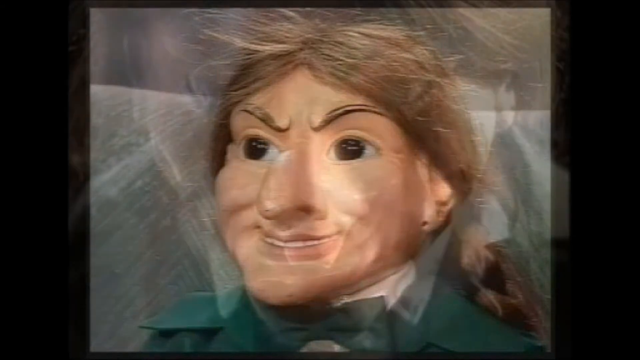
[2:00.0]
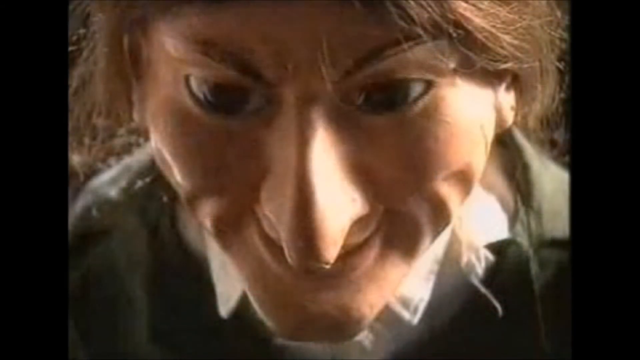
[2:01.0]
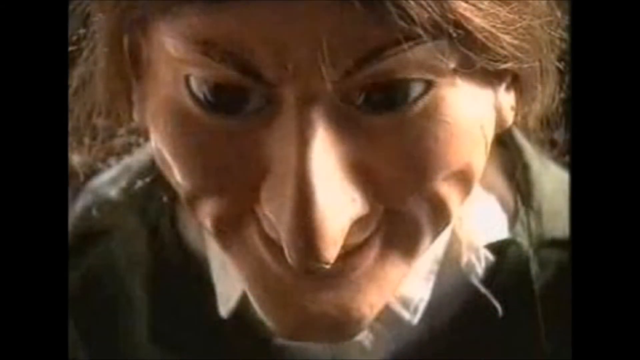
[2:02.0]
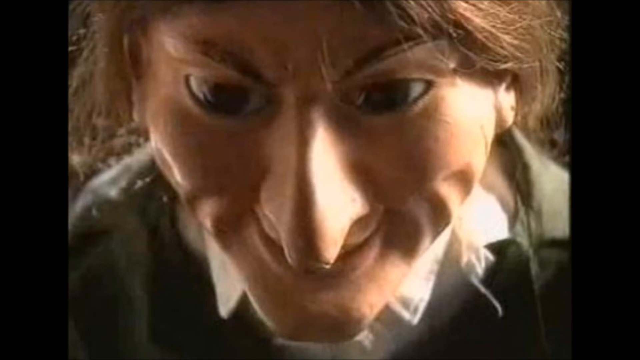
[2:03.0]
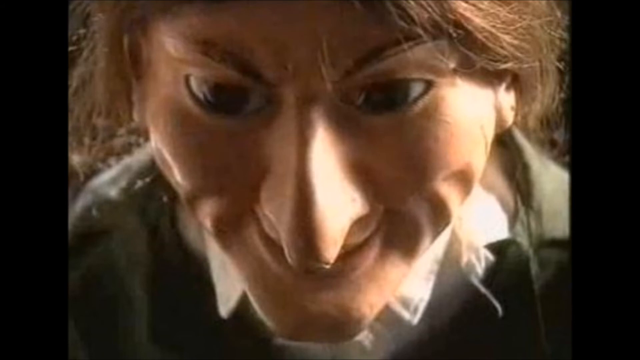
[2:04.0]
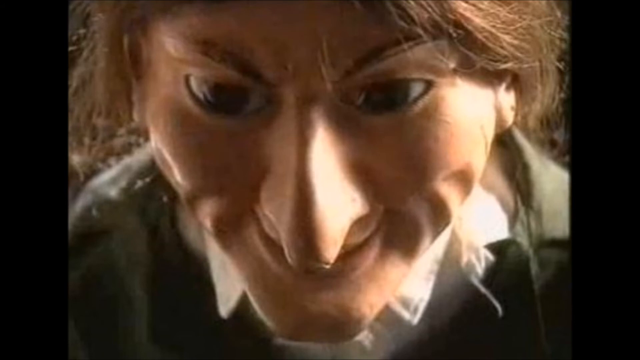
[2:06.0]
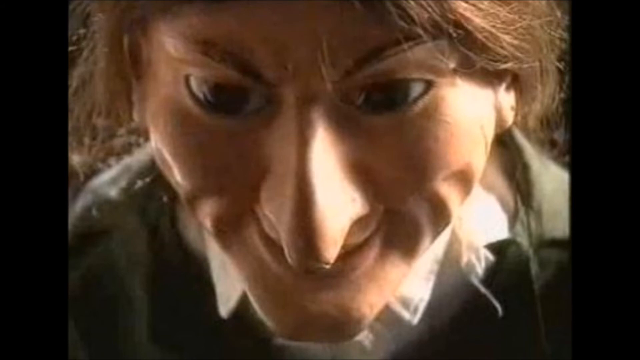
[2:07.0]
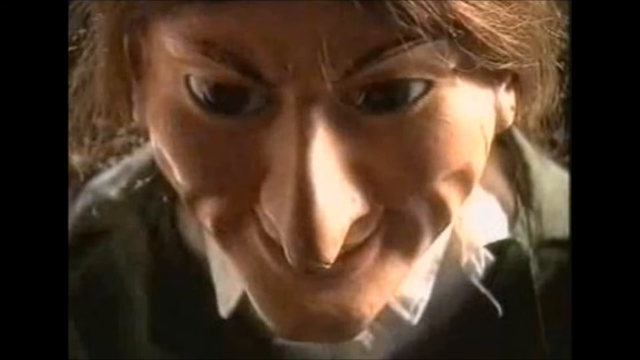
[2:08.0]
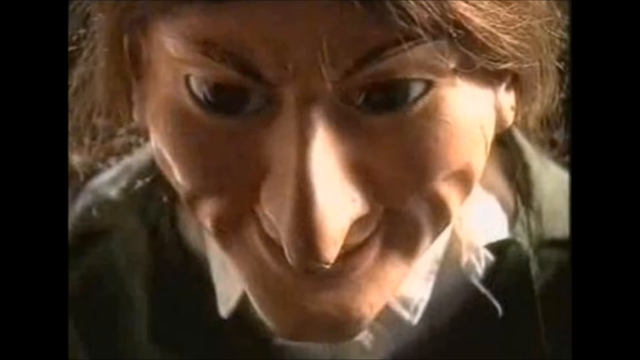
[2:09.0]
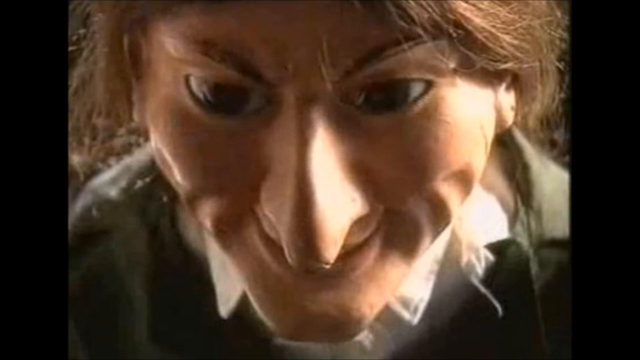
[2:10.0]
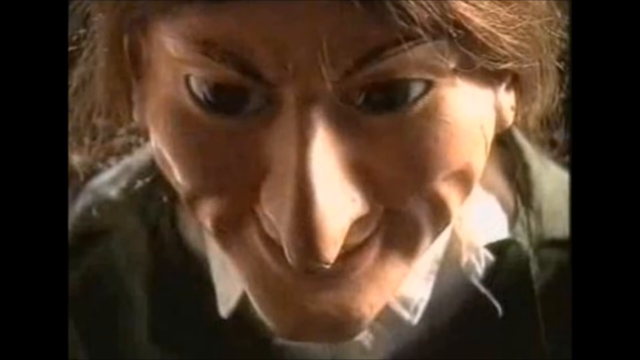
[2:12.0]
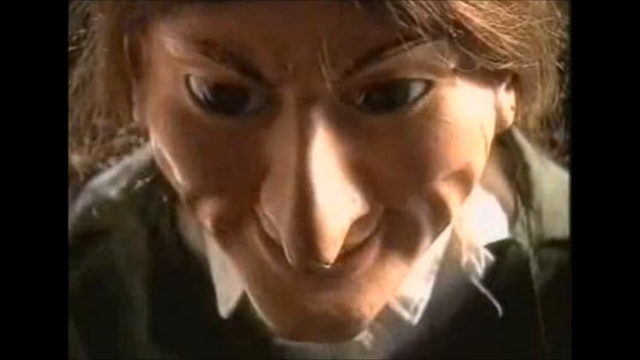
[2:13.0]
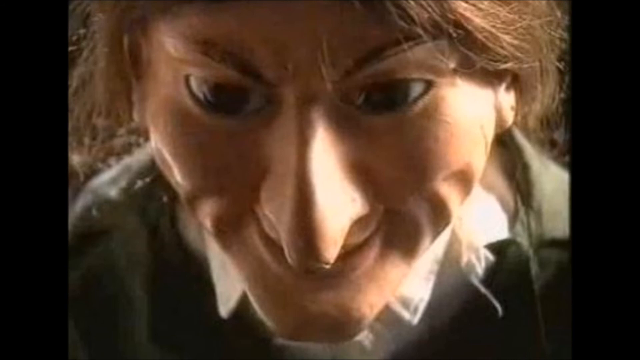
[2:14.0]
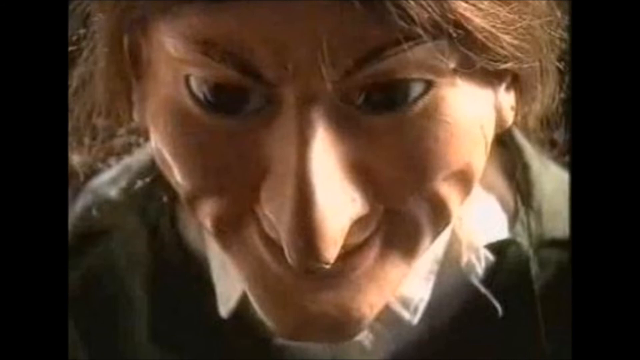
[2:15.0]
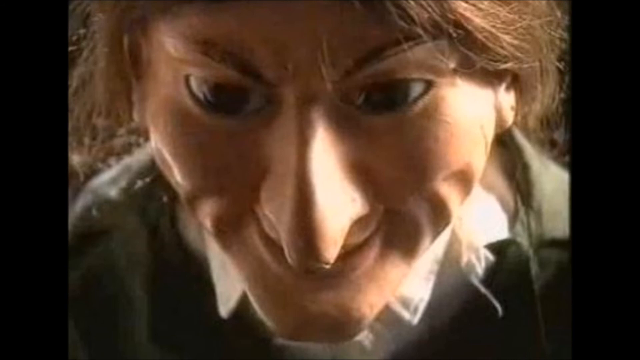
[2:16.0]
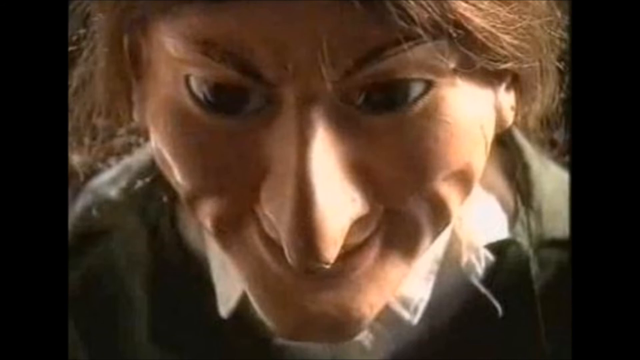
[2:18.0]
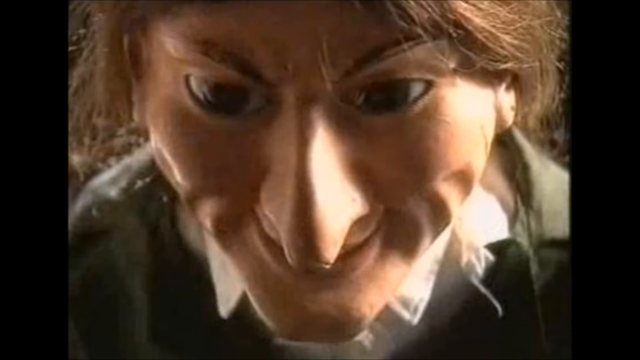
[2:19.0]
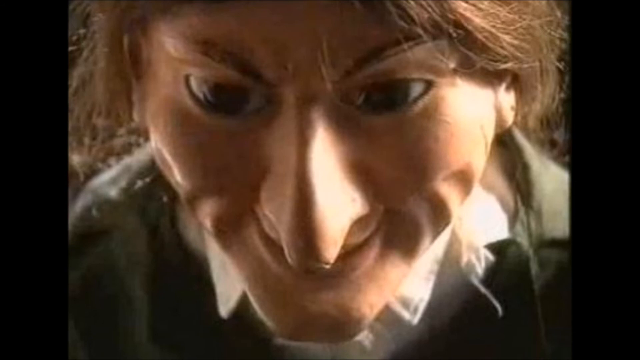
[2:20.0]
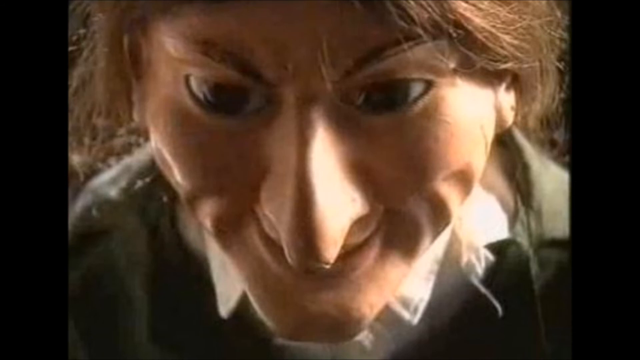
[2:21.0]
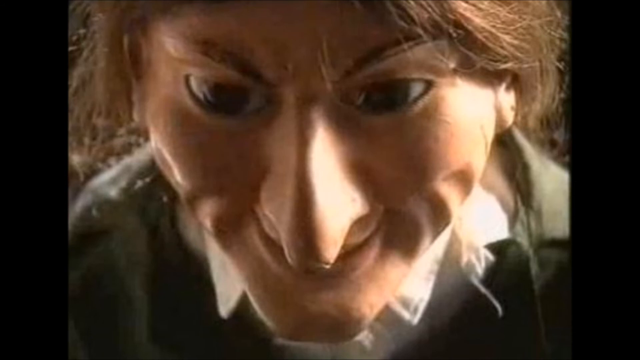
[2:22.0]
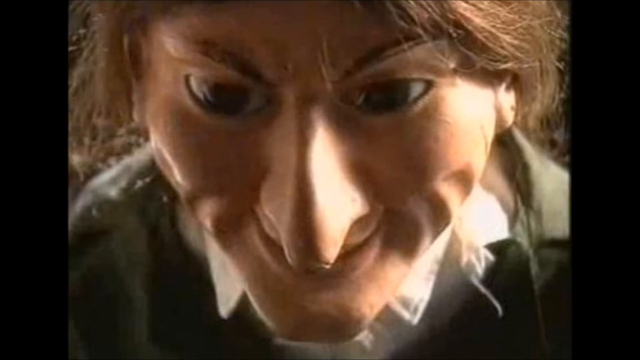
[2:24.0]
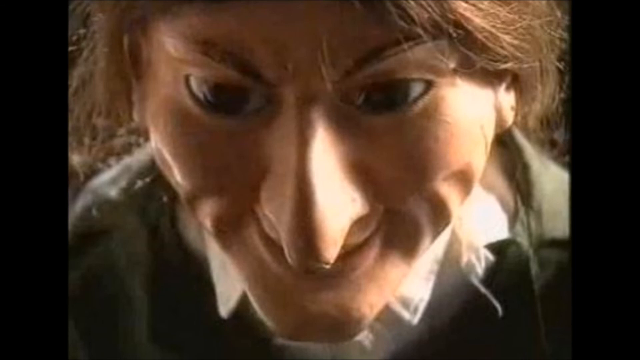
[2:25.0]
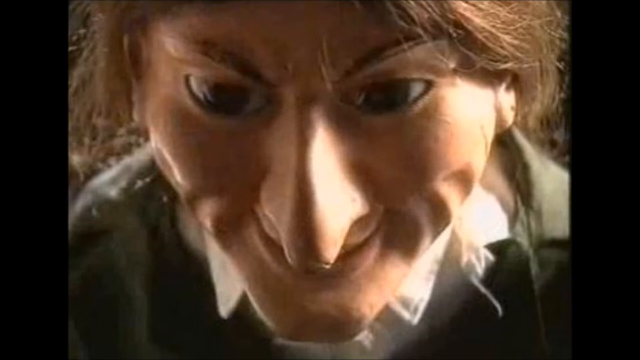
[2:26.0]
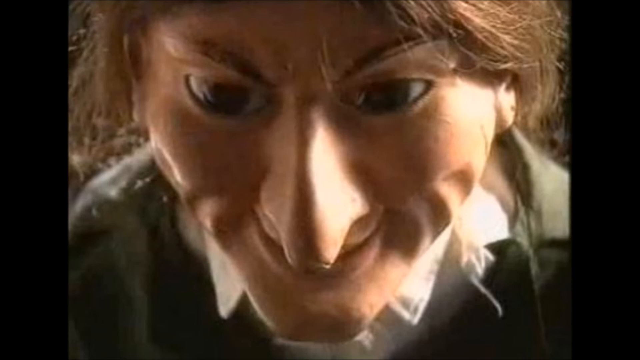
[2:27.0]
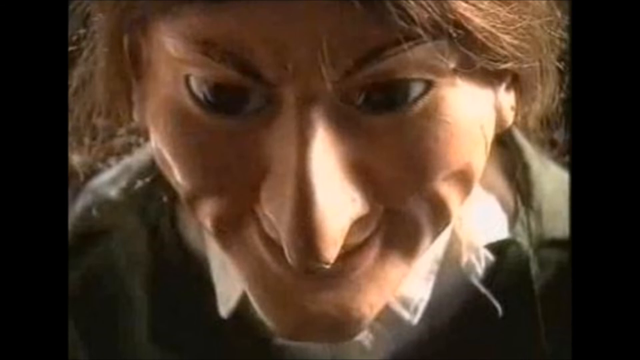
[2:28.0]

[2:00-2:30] The doll sits on some kind of couch in the background, with all its features visible: a sharp nose, a sharp chin, really big eyes, extremely black eye sockets, long and big eyebrows, and really long brown hair that goes into a ponytail. It wears an olive green t-shirt. A transition leads to a picture of the doll from above, with some light coming from behind. From this perspective the nose looks extremely big; the doll has dimples and wears a white t-shirt and an olive green jacket.